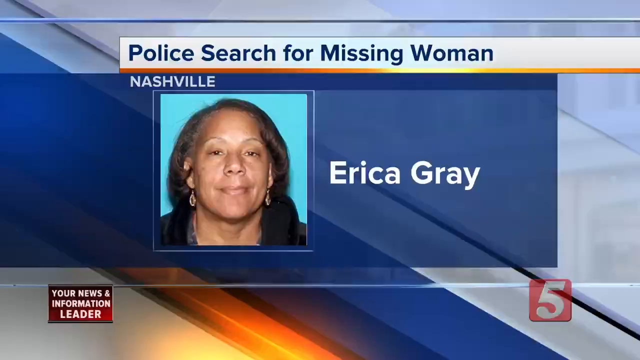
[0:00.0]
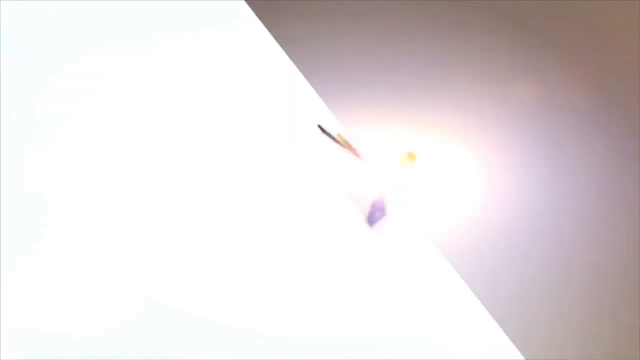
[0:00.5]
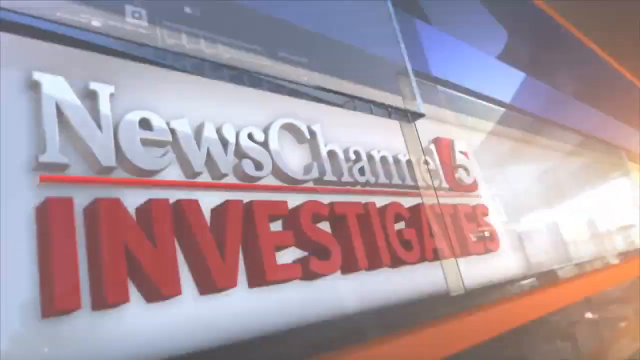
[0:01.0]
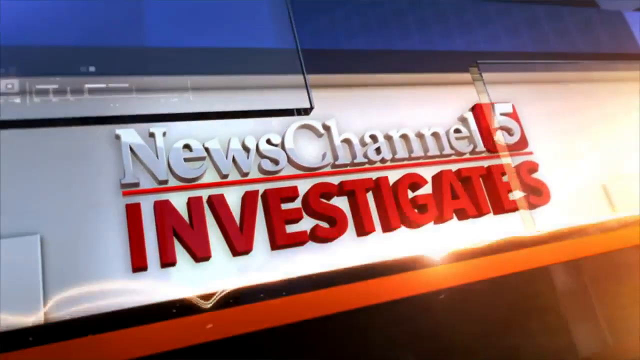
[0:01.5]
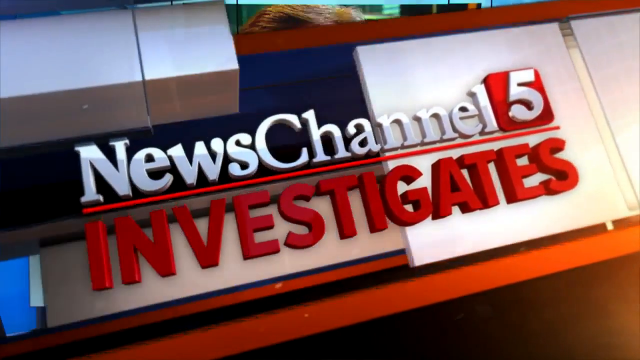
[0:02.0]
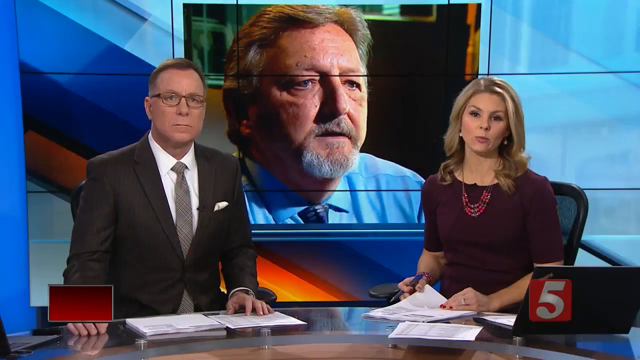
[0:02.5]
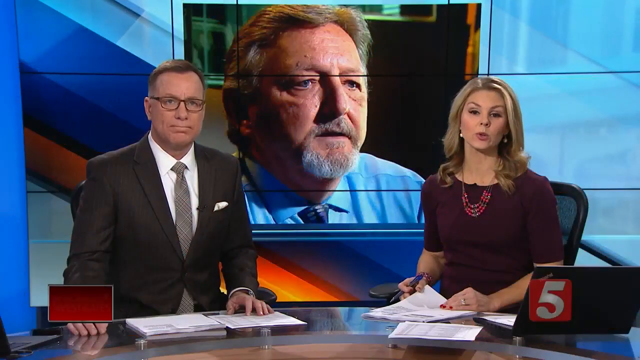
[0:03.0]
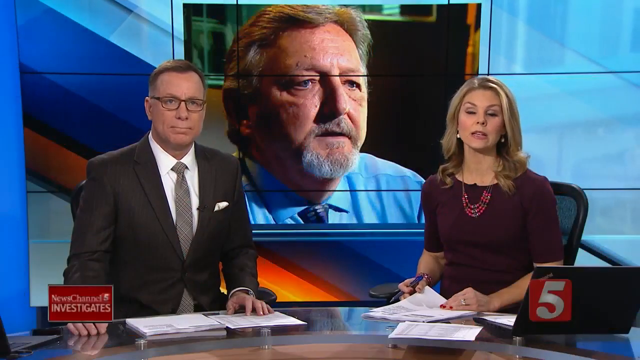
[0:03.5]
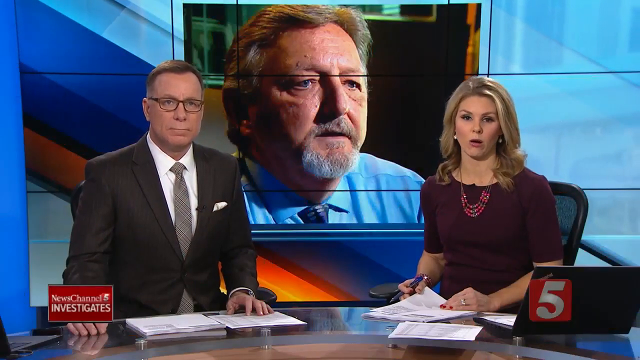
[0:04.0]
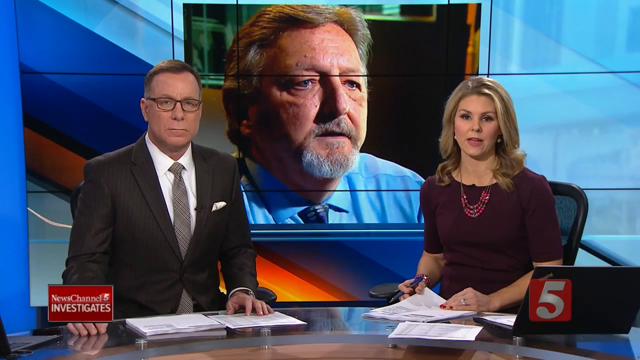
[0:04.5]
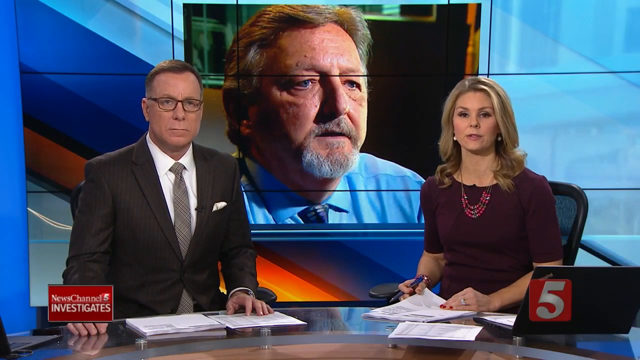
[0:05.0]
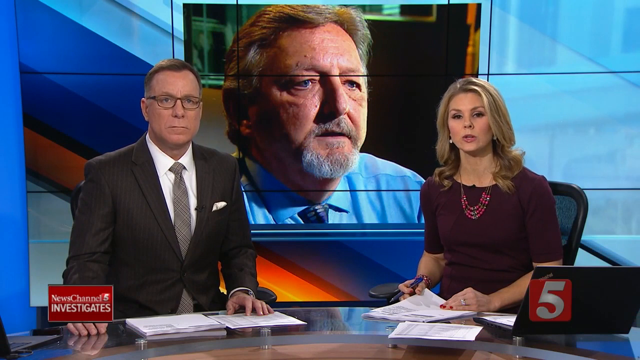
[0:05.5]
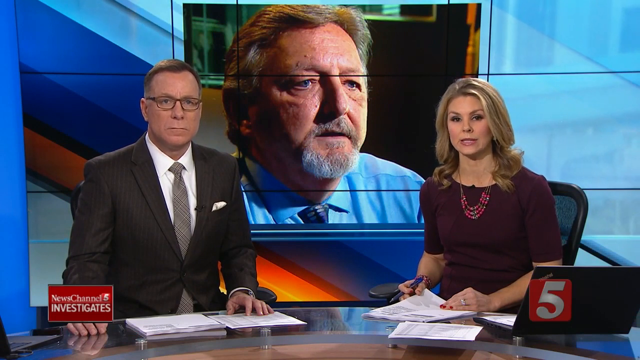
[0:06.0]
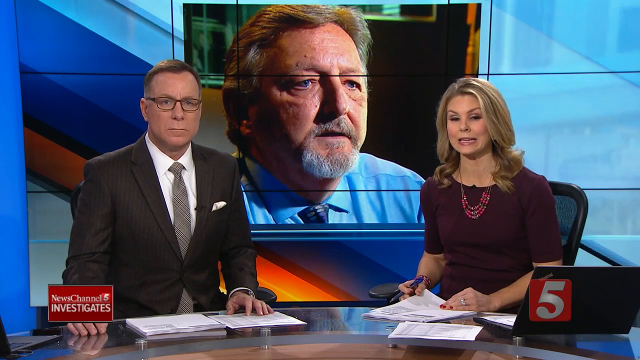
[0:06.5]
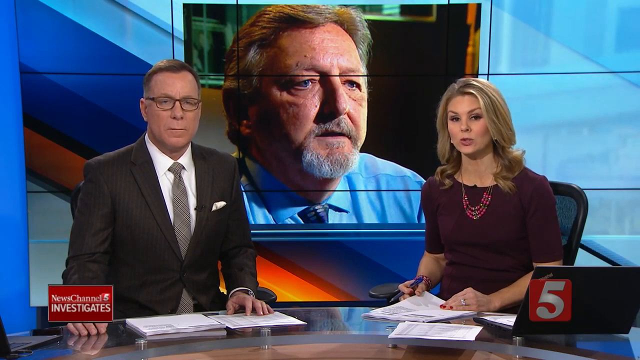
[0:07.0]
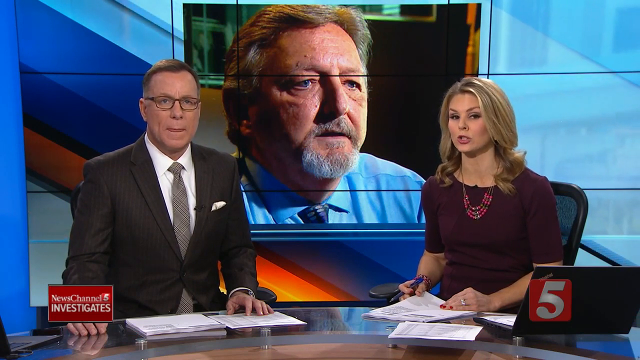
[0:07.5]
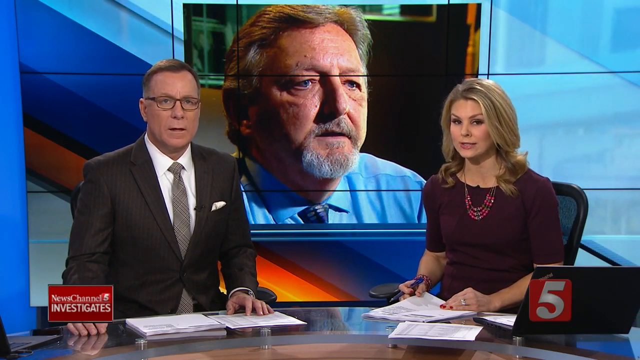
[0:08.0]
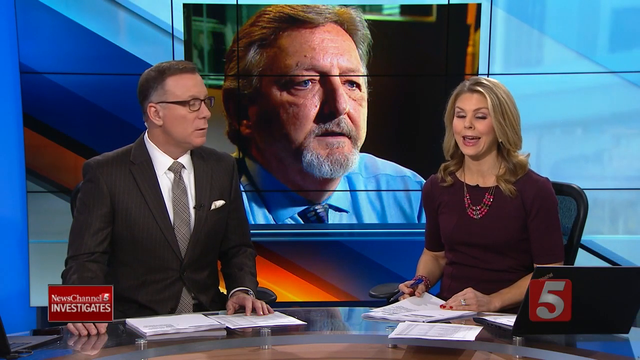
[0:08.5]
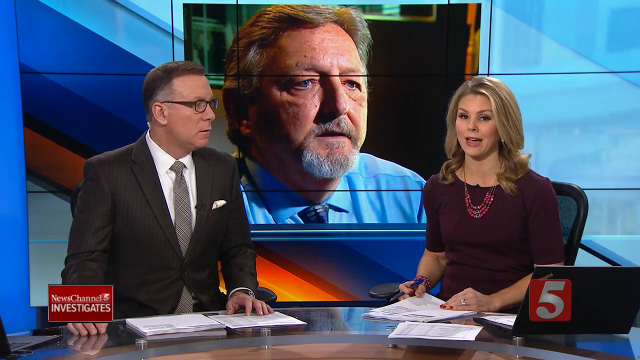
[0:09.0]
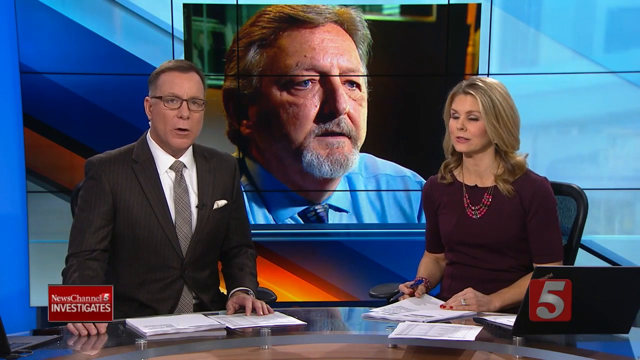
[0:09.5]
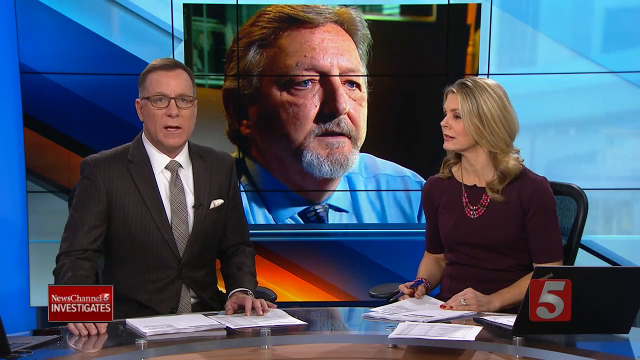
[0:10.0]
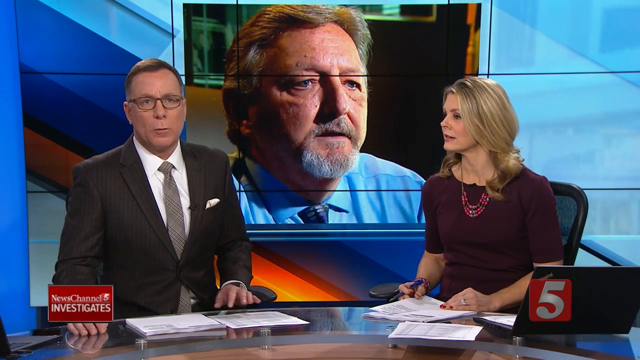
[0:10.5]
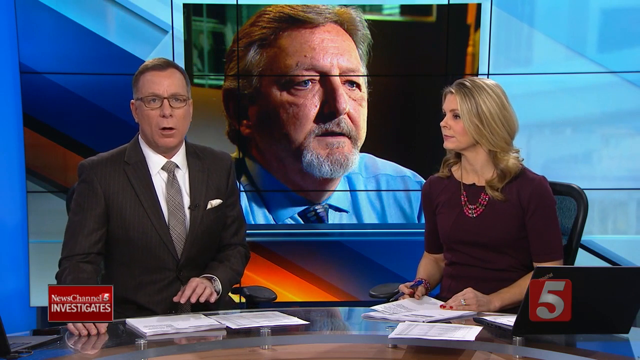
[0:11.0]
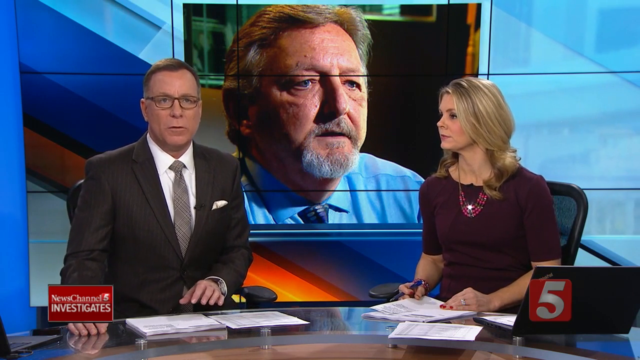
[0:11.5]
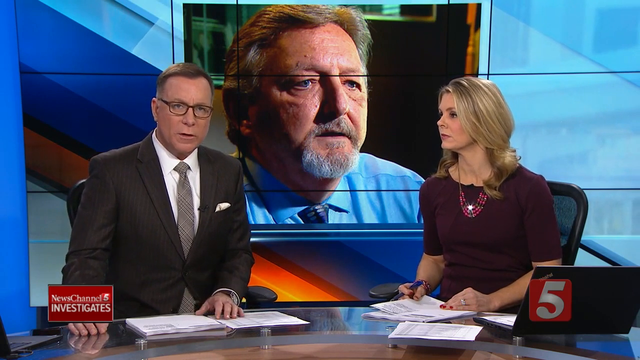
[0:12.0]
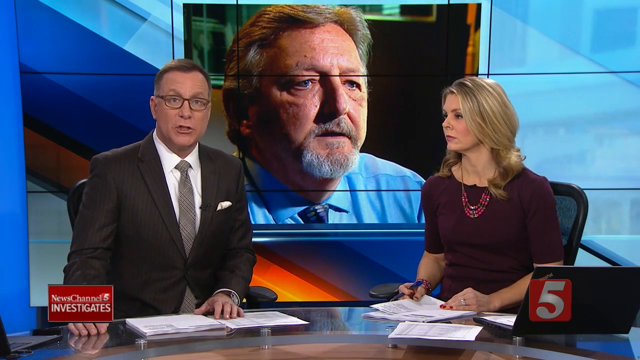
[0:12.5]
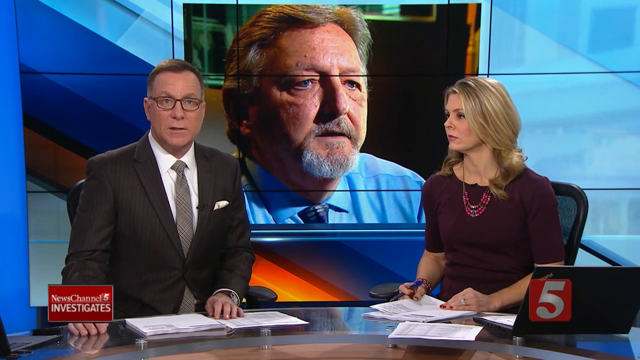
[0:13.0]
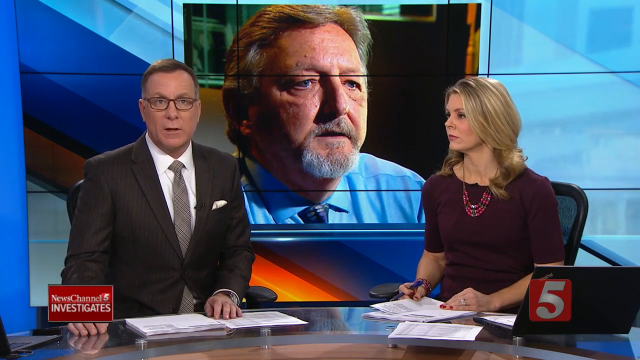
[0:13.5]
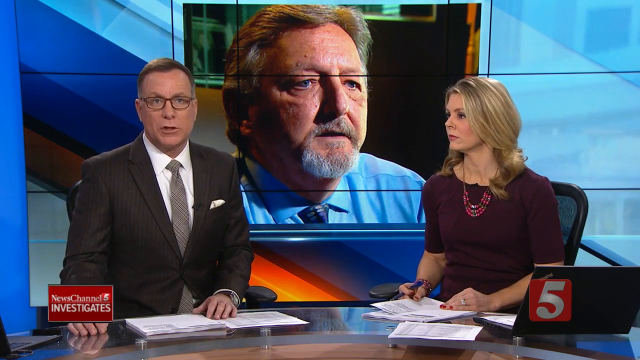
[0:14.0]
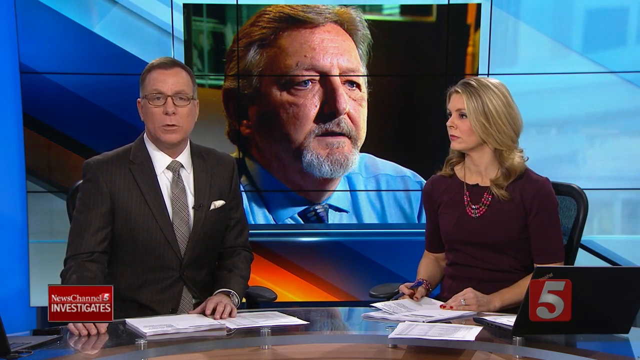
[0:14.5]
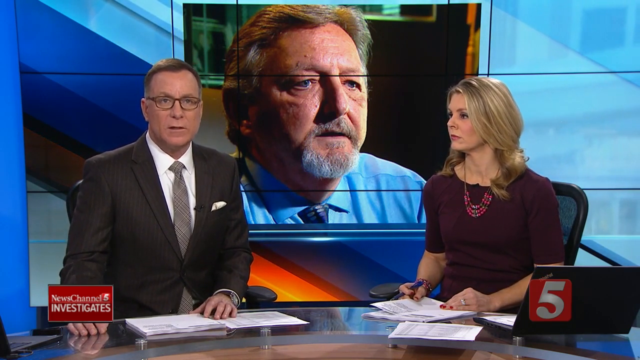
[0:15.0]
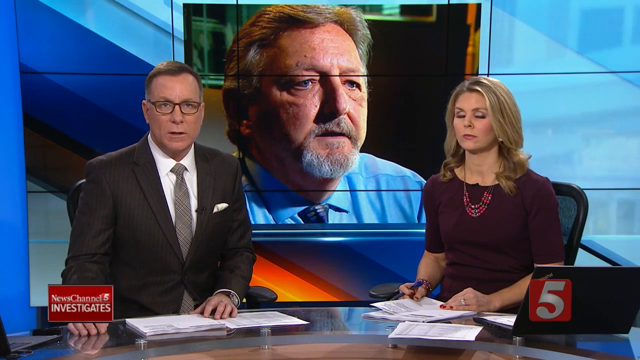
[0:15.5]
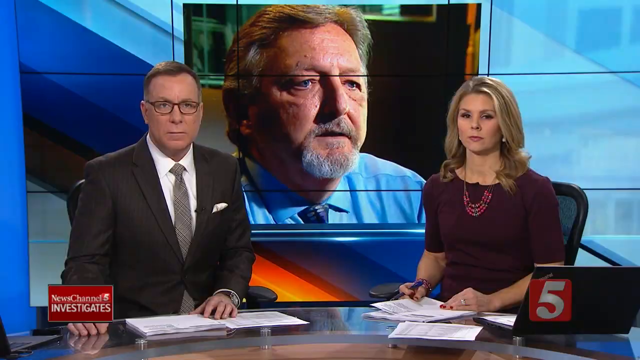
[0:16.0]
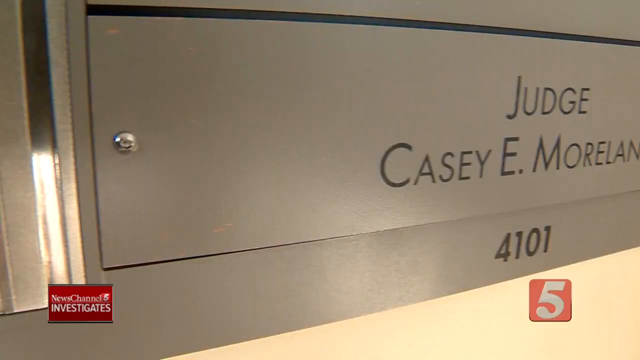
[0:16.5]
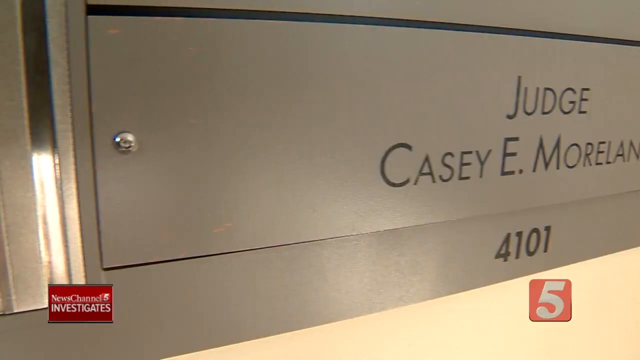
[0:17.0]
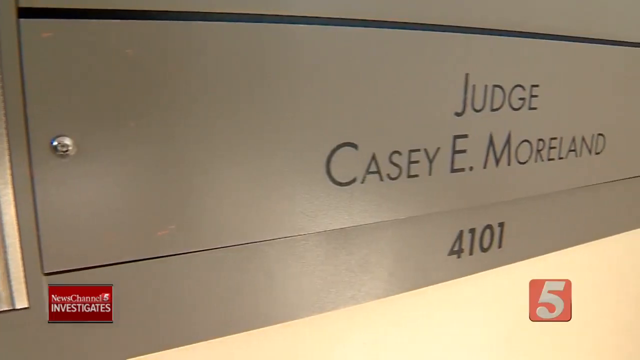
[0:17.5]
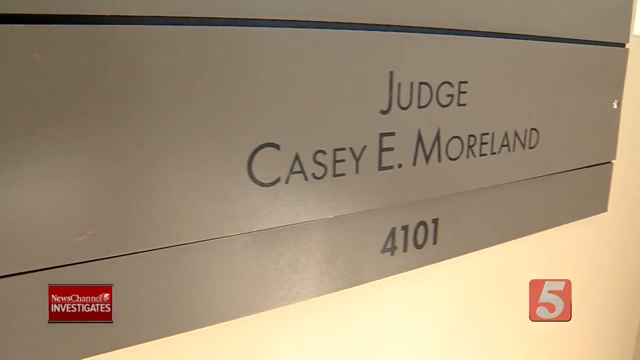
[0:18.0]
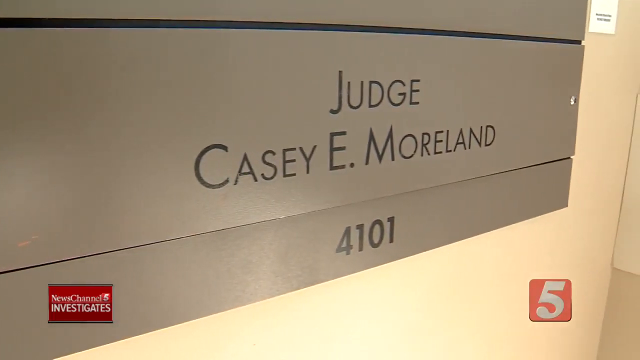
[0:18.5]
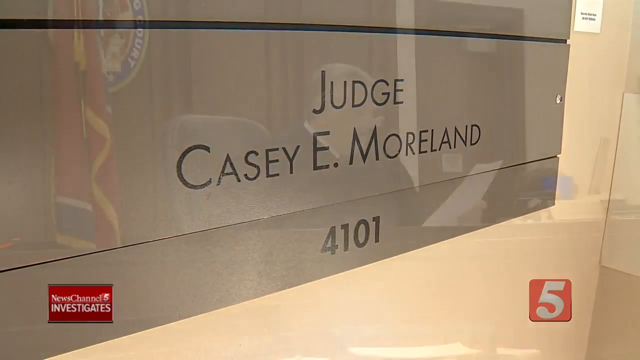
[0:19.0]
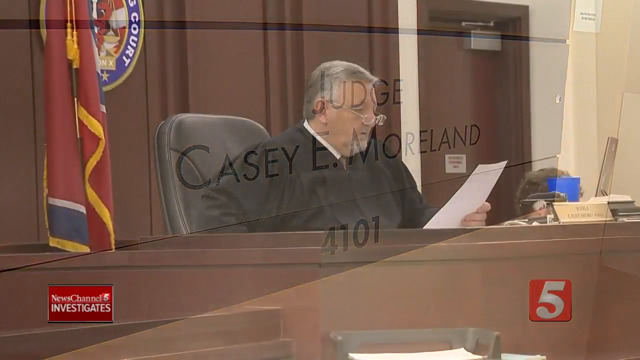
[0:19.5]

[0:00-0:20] A bright white line runs through the middle of the screen, with a smaller blue line above it and an even smaller orange line below. The white line reads "News Channel" in white, followed by a red box with the number 5 in white, and underneath, in all red, is the word "Investigates". Next, a gentleman on the left wears a black suit, a gray tie and a white shirt; he has glasses and short, dark hair. He sits at a desk, his left hand on the desk holding down papers. To his left is a woman with long blonde hair in a maroon dress, with a red necklace hanging from her neck; both of her hands are on top of a paper and she holds a blue pen in her right hand. Behind them is a picture of a middle-aged man with long but styled hair and a full goatee, wearing a blue shirt and a blue tie. The woman on the right speaks first; the man on the left looks to her, then looks directly at the camera and begins speaking, raising his hand slightly and putting it back down on the desk. The scene moves to what appears to be a locker or cabinet with a lock on the left-hand side; in dark lettering in the center of its opening are the words "Judge Casey E. Moreland", with the numbers "4101" underneath. Finally, the man from the picture behind the reporters is shown sitting at the courthouse bench in a robe, wearing glasses and reading a document. To his right is a flag, and behind him is an official seal of a county.